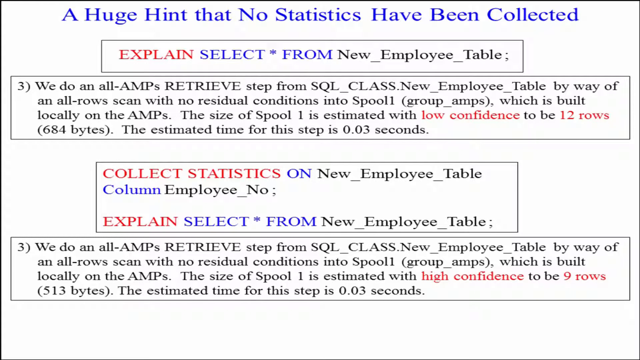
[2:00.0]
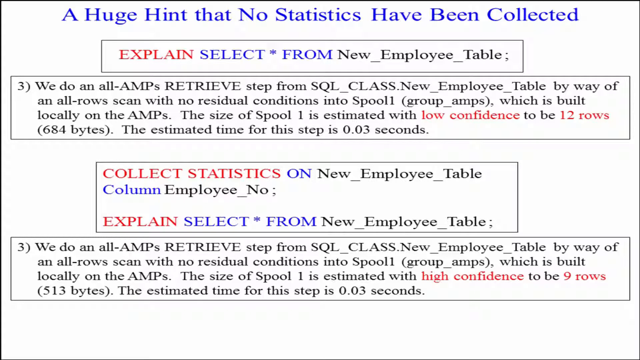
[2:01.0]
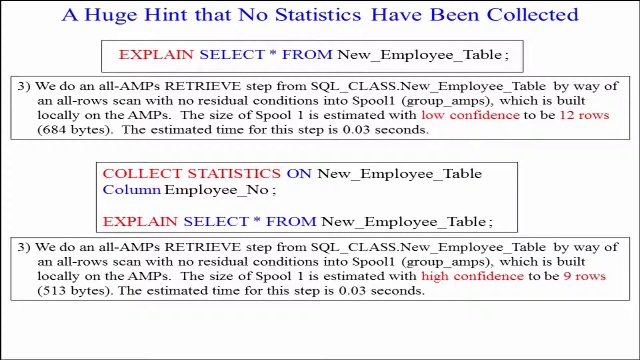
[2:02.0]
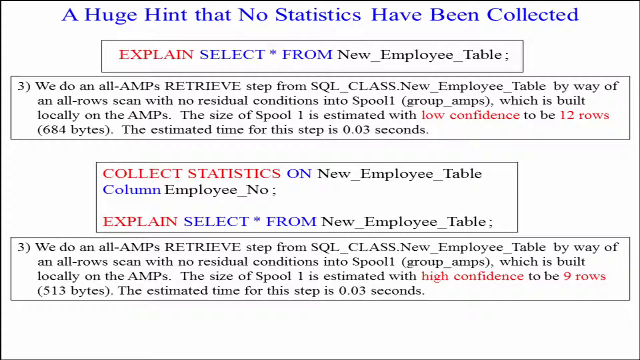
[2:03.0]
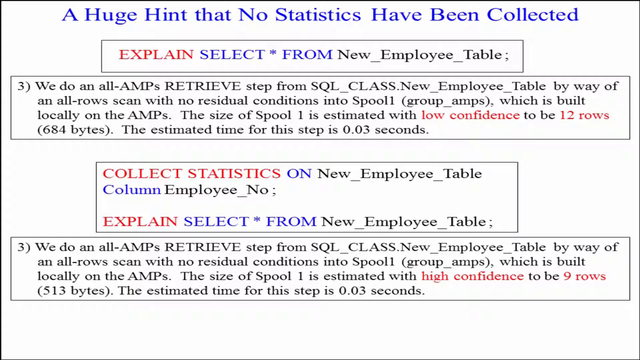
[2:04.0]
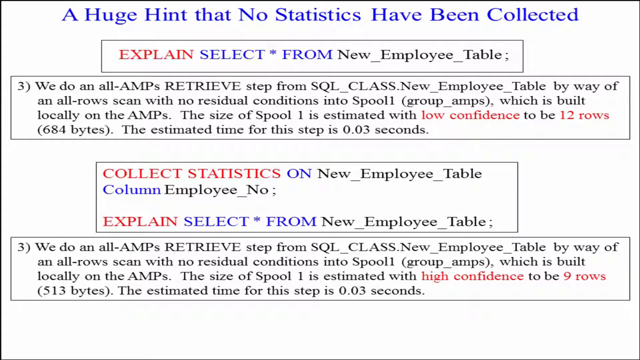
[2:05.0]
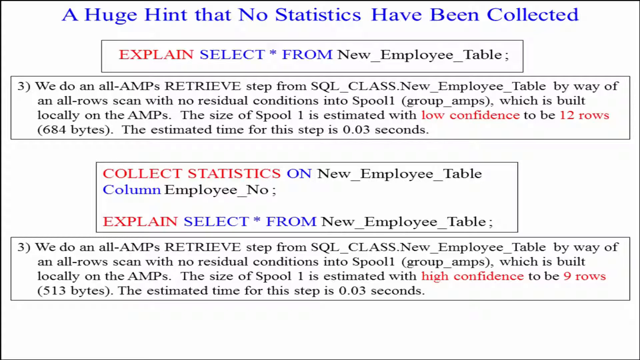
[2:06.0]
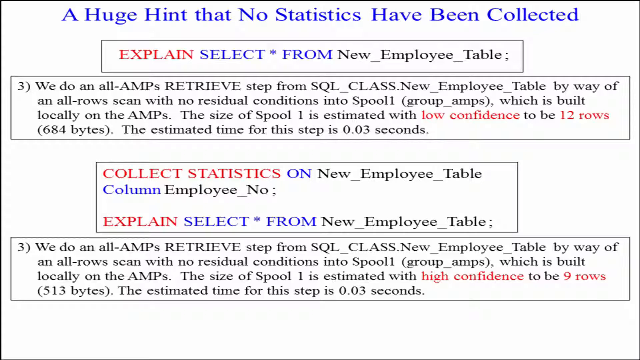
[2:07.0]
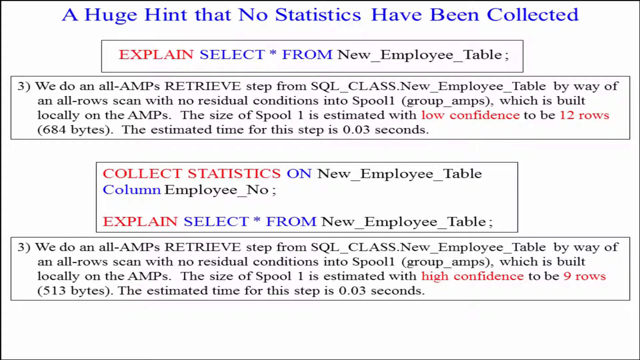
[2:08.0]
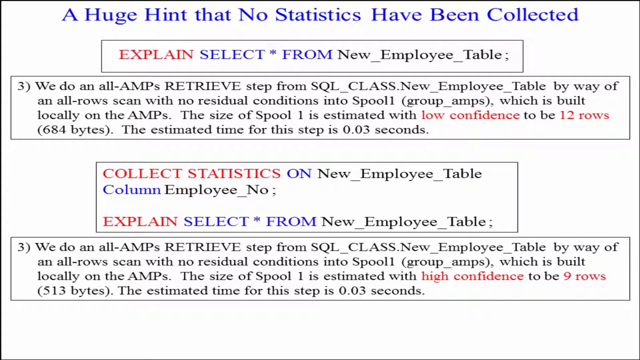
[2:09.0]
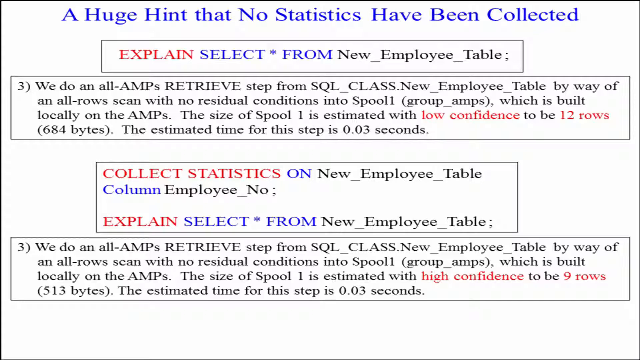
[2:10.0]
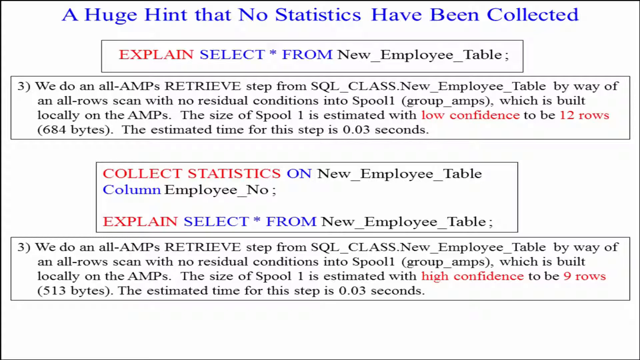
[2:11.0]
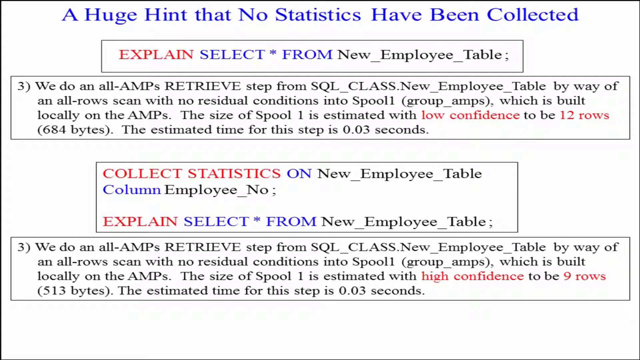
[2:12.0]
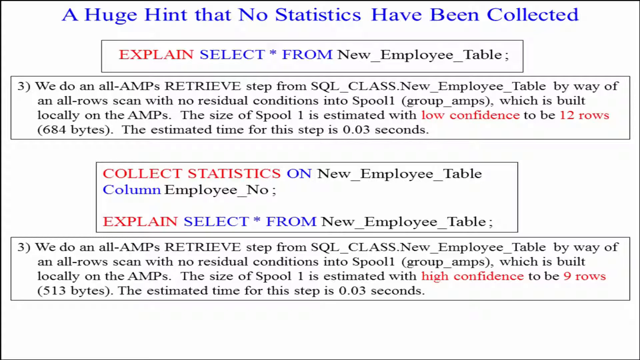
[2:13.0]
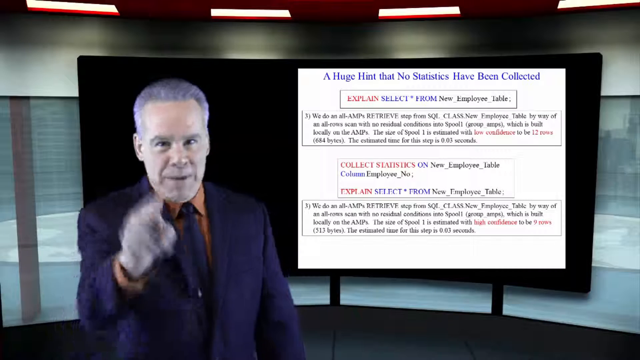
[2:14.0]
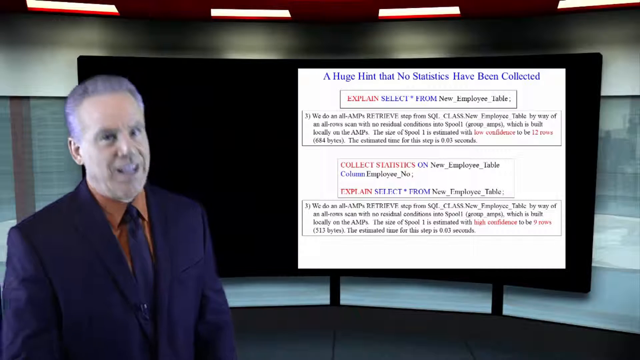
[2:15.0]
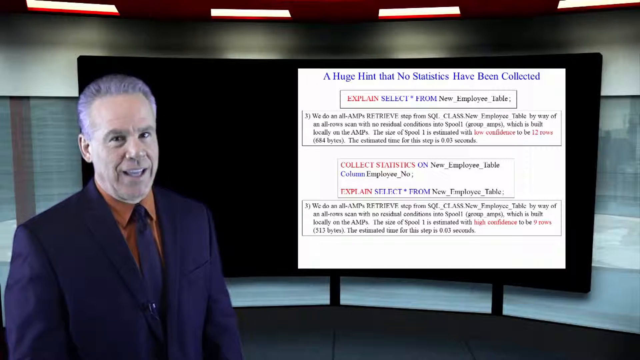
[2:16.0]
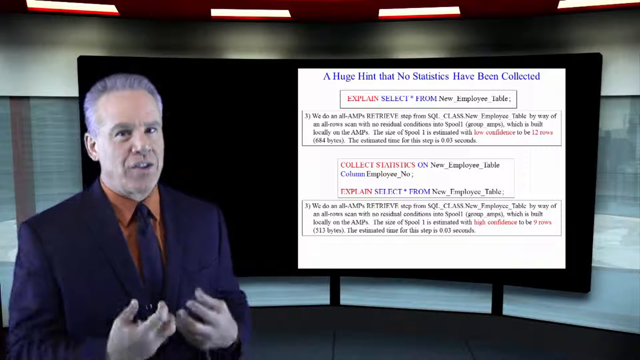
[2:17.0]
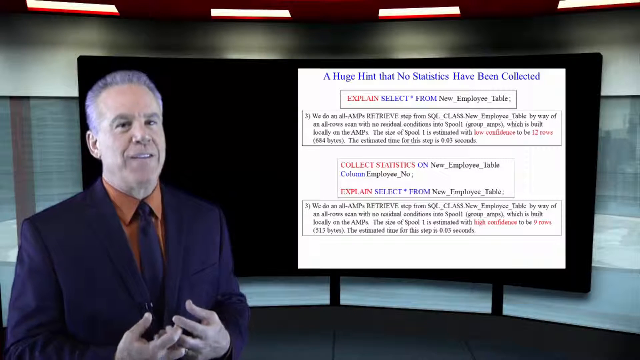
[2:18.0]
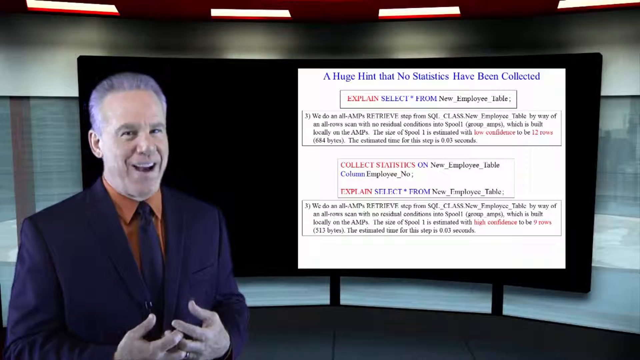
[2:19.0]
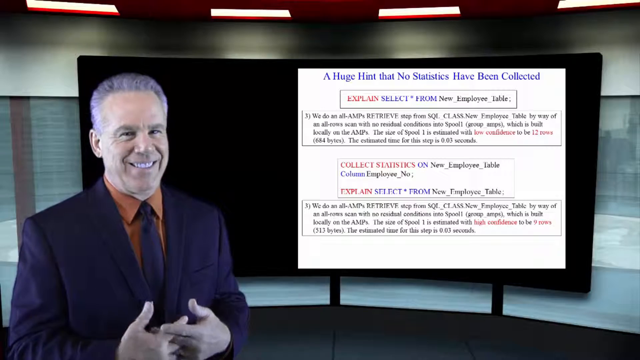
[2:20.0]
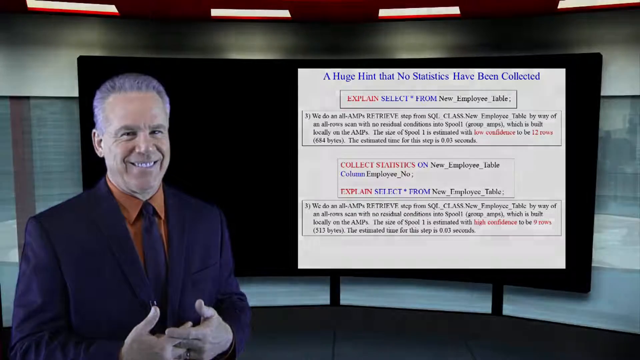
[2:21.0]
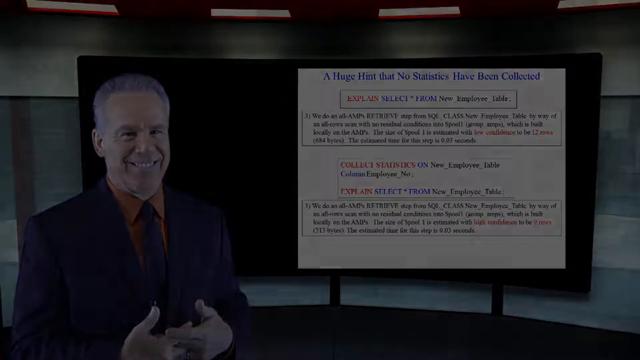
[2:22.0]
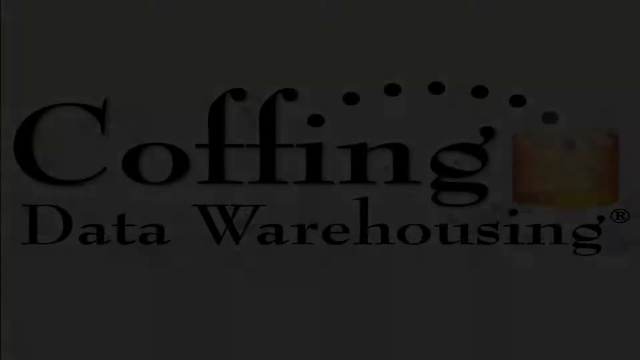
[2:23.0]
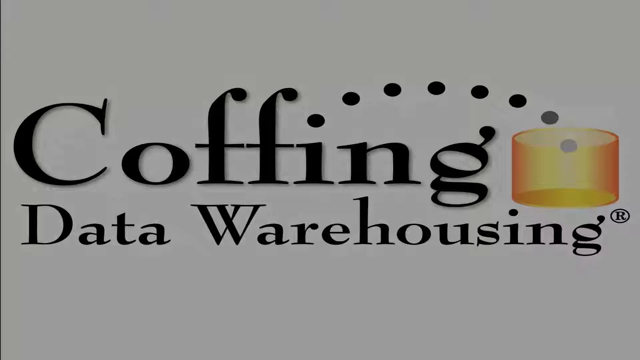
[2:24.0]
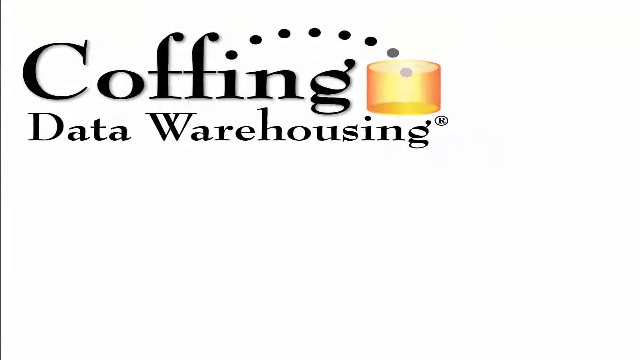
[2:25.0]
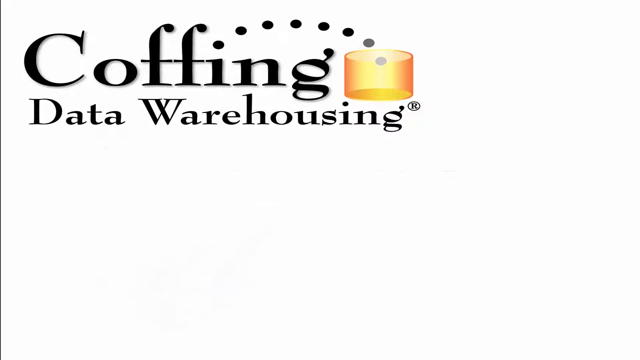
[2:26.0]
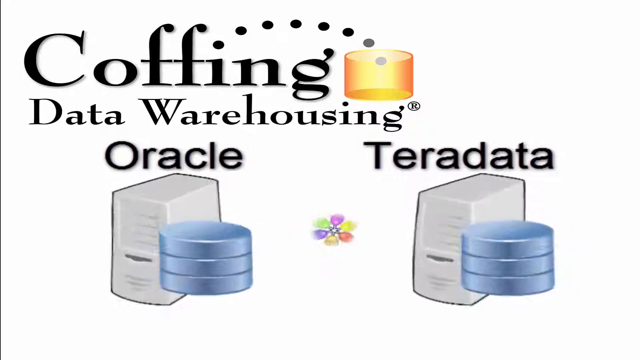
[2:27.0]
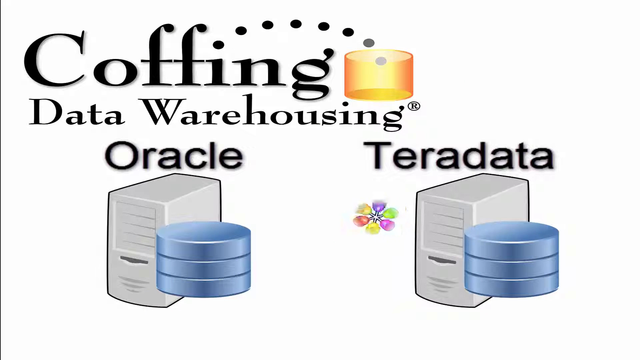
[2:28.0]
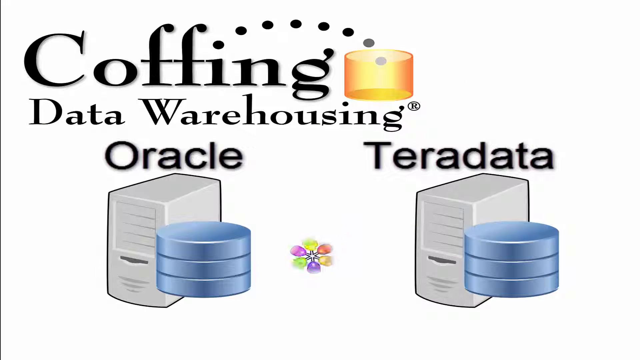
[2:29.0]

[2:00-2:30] A white screen shows text, with "a huge hint that no statistics have been collected" in blue at the top. Some of the headings on the screen are "Explain Select from New Employee Table" and "Collect Statistics." The video then cuts to a close-up of the man, who points straight at the viewer and smiles; he appears to be wrapping up his lecture in an enthusiastic manner. Next comes another screen with the logo "Koffing Data Warehousing Oracle Terra Data" and two stylized illustrations of what looks like it might be a computer tower.